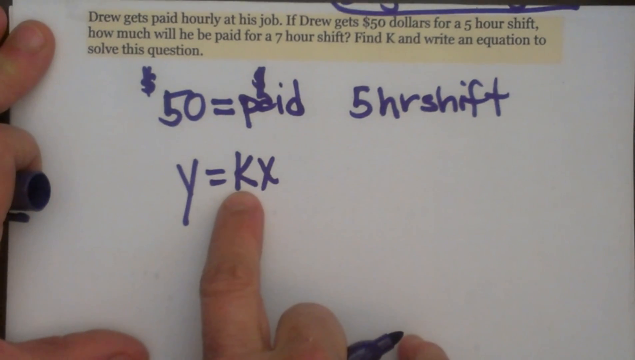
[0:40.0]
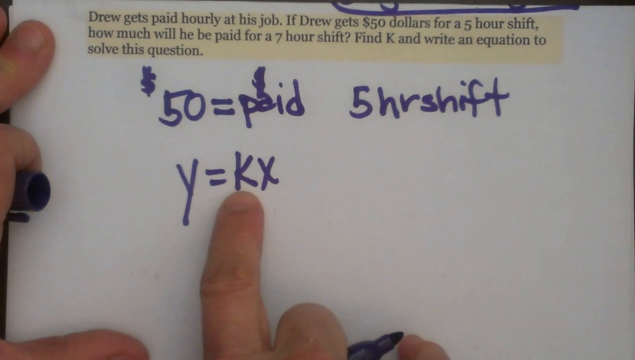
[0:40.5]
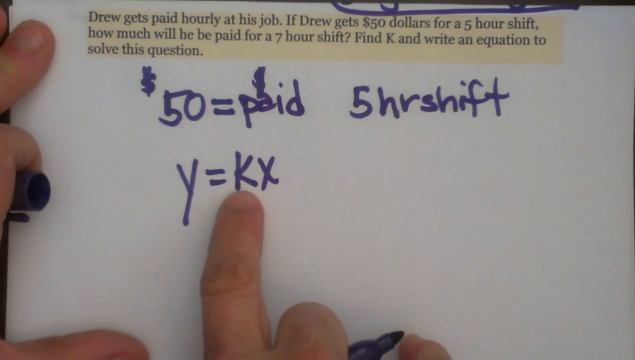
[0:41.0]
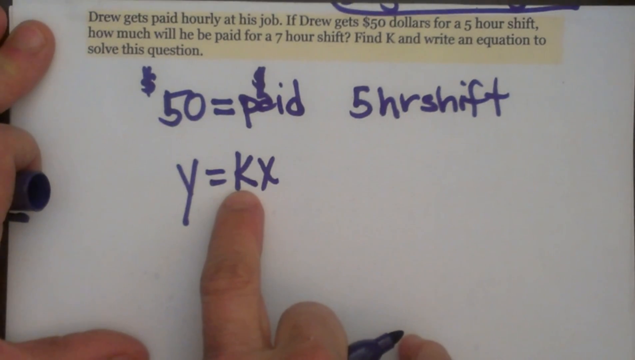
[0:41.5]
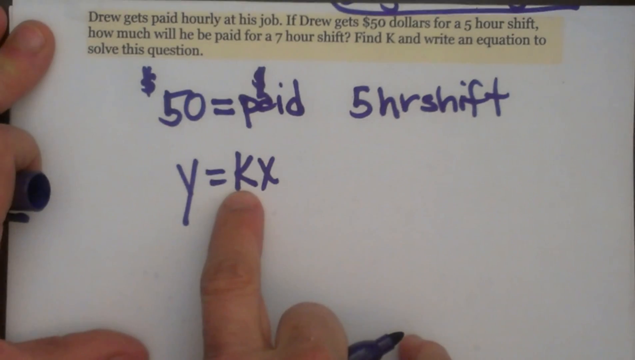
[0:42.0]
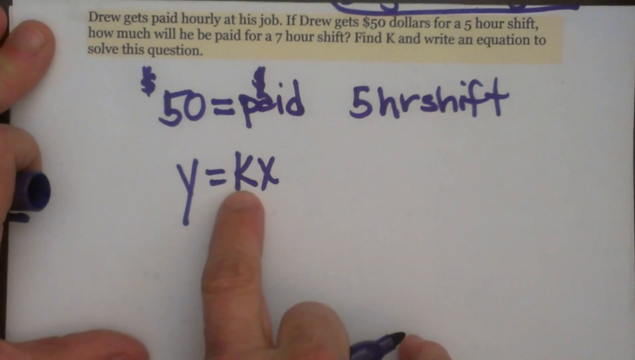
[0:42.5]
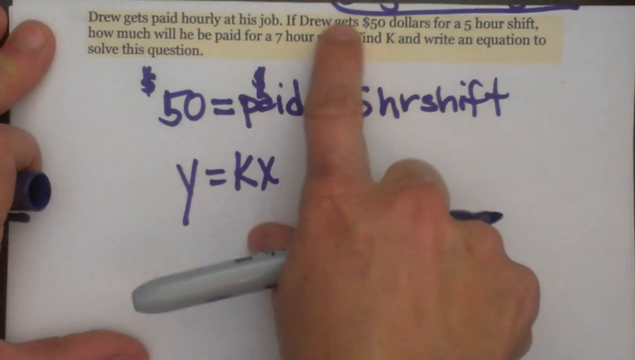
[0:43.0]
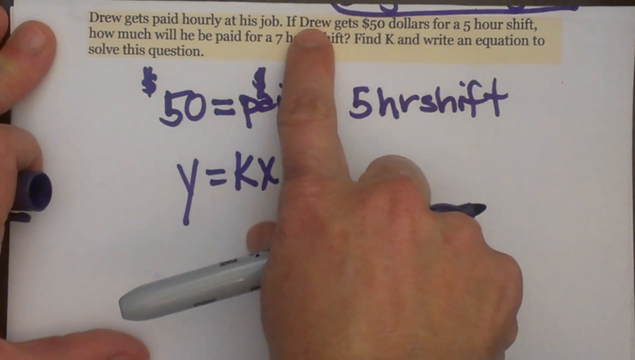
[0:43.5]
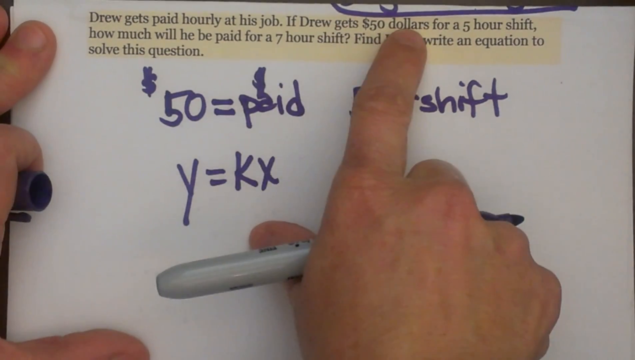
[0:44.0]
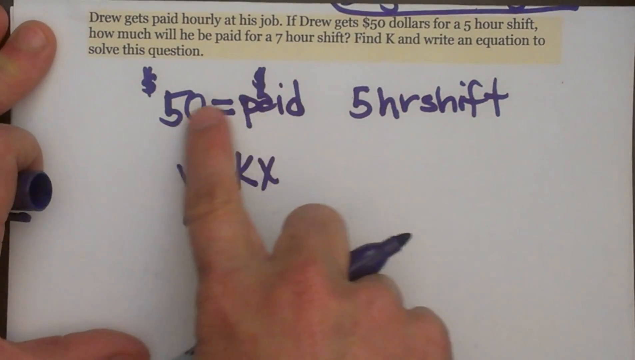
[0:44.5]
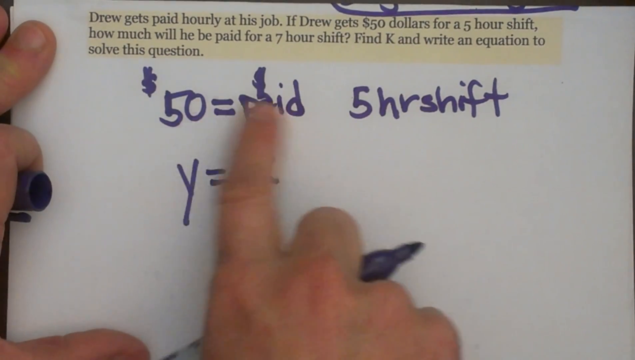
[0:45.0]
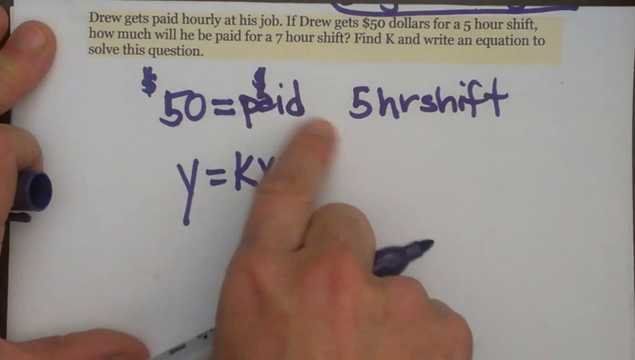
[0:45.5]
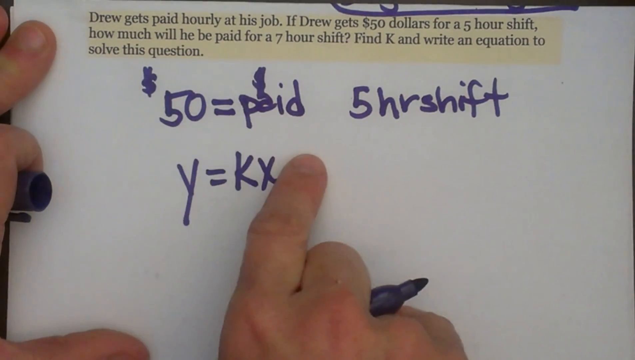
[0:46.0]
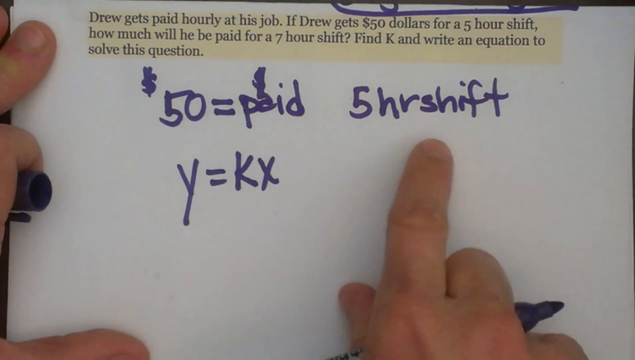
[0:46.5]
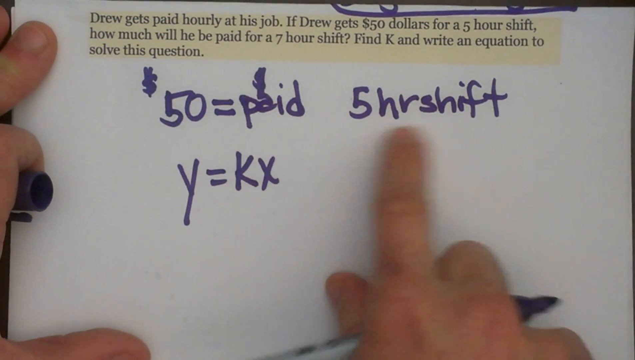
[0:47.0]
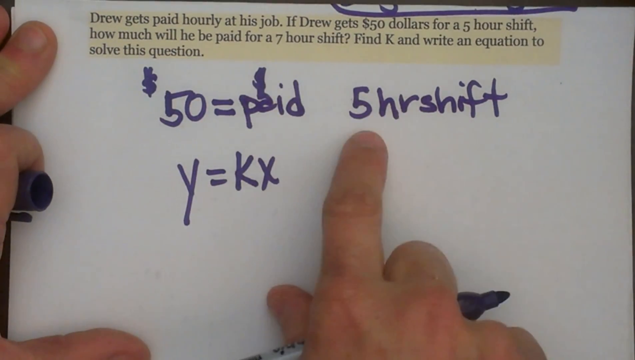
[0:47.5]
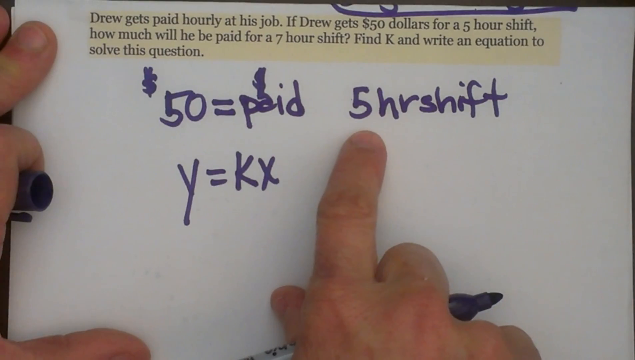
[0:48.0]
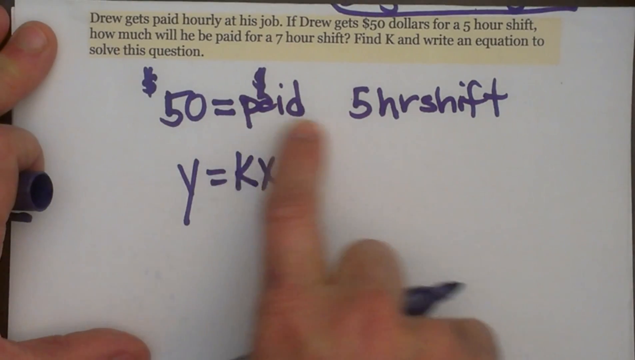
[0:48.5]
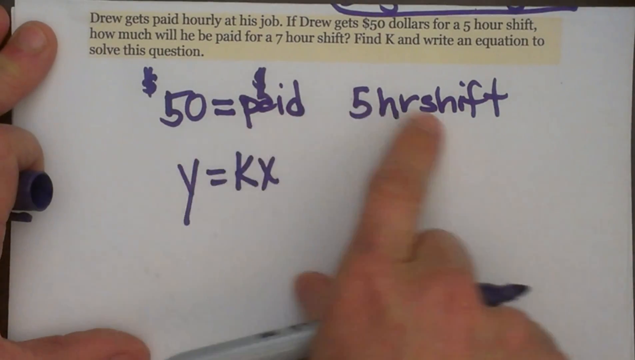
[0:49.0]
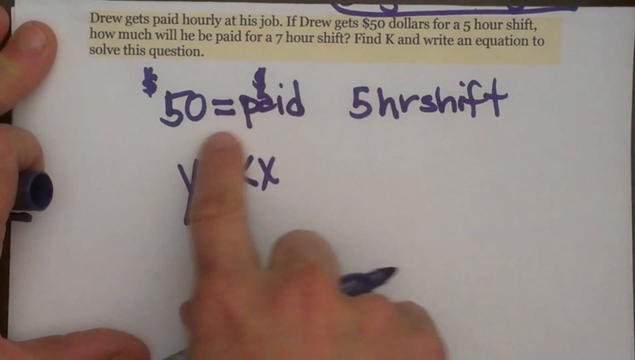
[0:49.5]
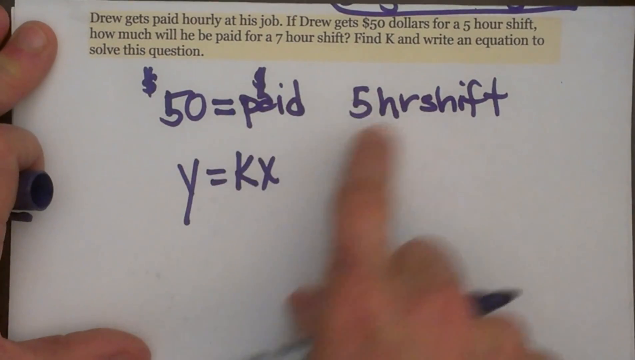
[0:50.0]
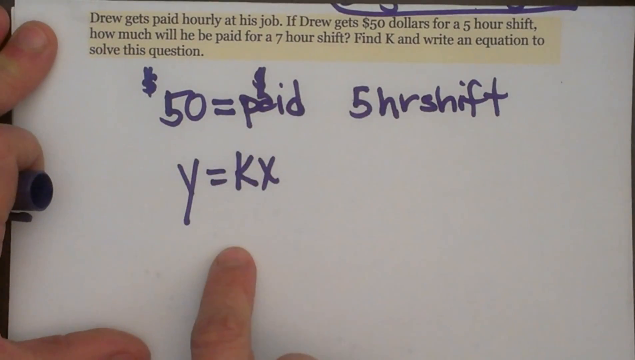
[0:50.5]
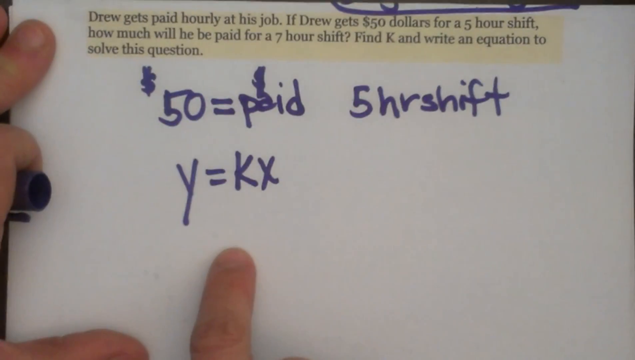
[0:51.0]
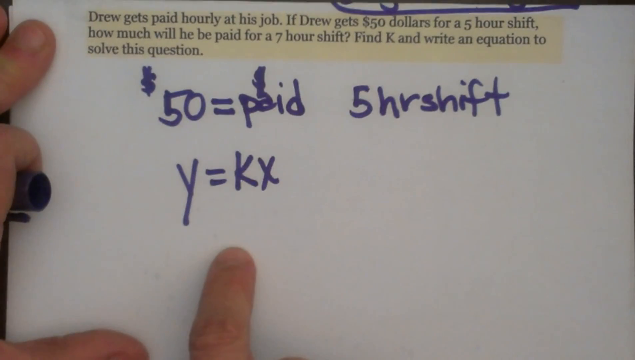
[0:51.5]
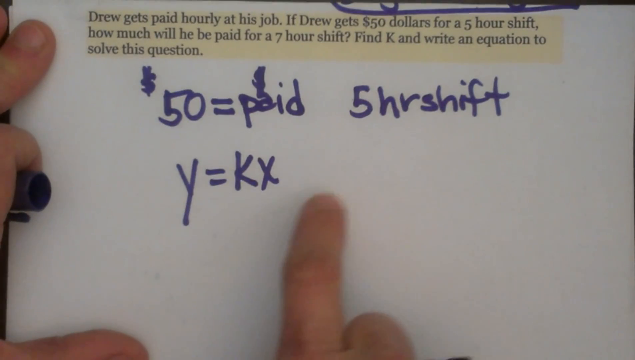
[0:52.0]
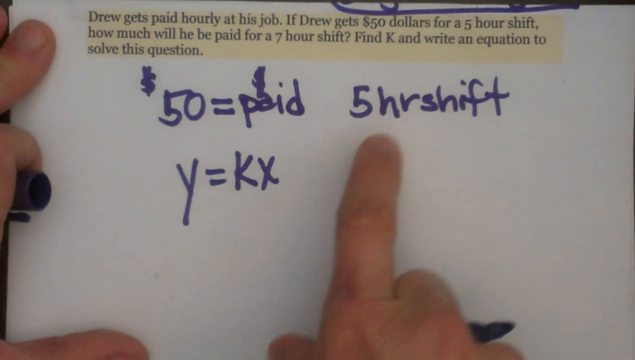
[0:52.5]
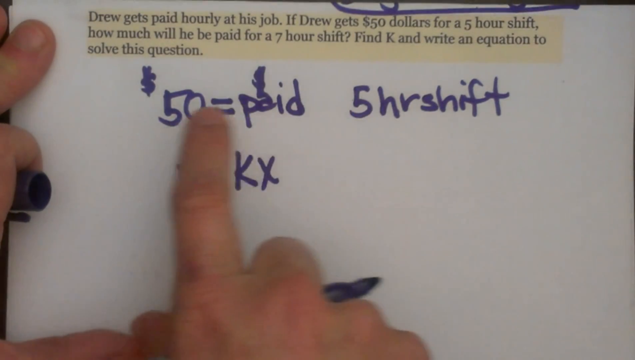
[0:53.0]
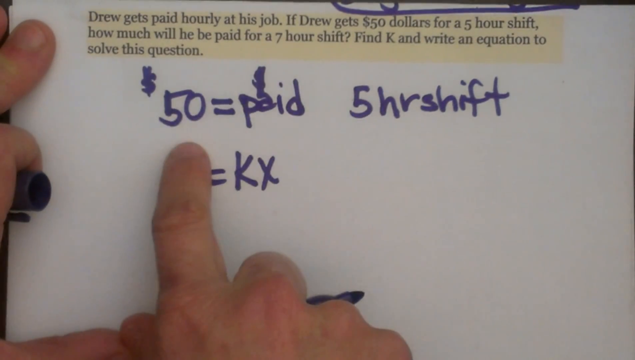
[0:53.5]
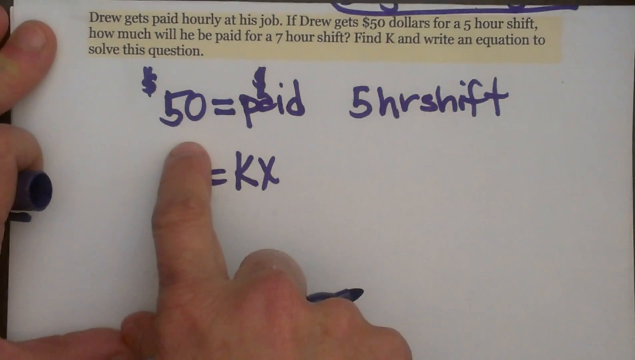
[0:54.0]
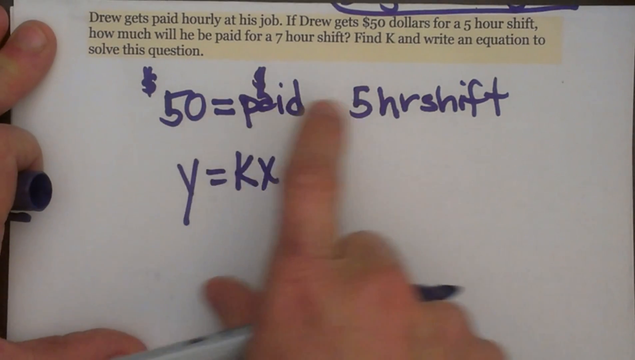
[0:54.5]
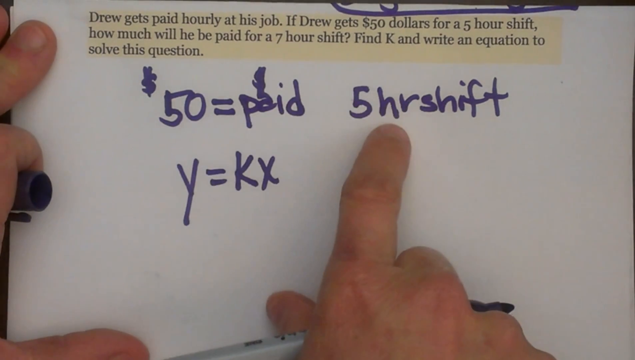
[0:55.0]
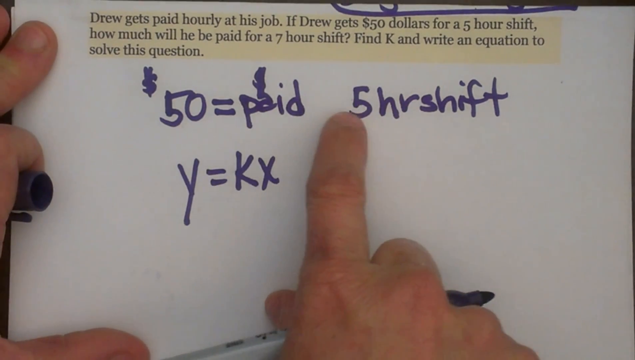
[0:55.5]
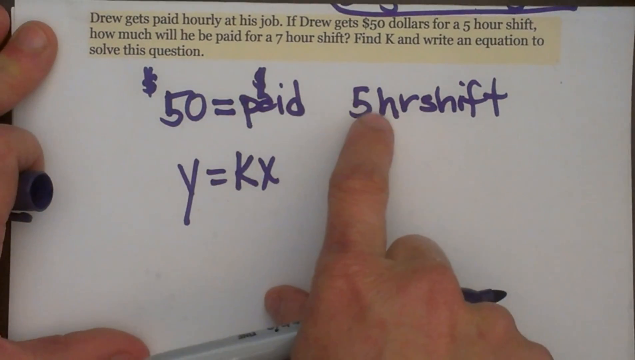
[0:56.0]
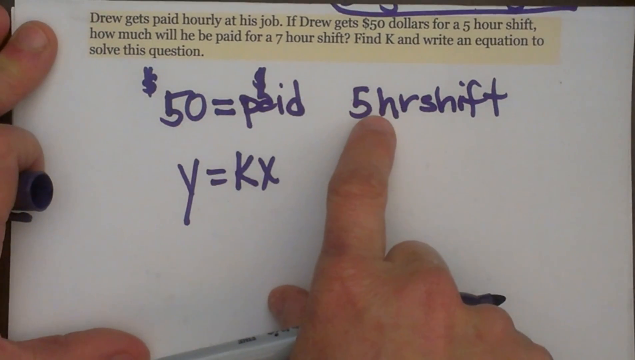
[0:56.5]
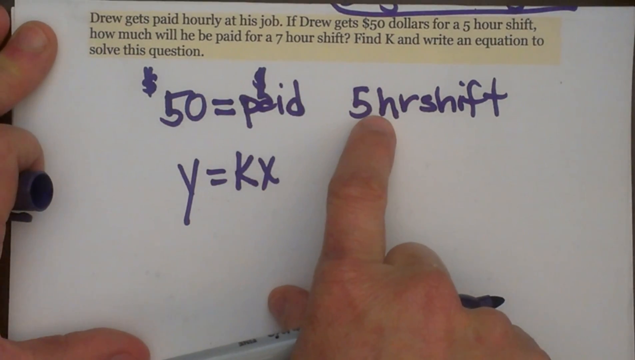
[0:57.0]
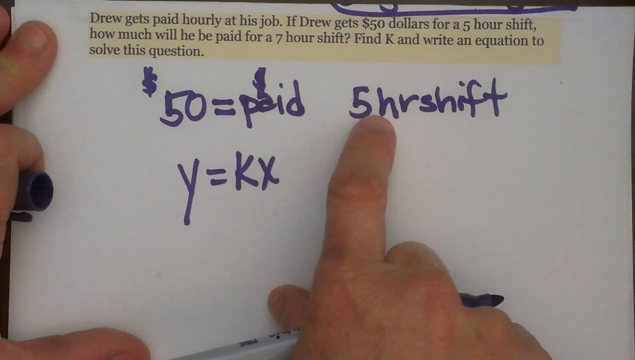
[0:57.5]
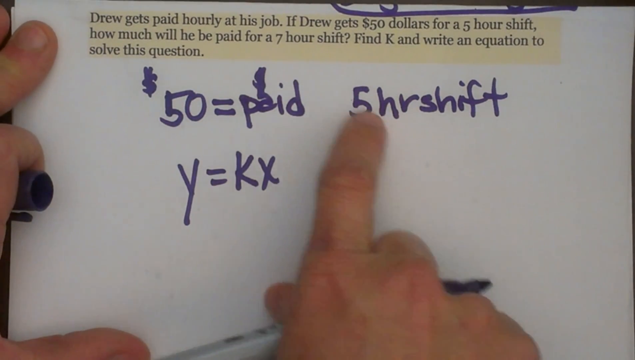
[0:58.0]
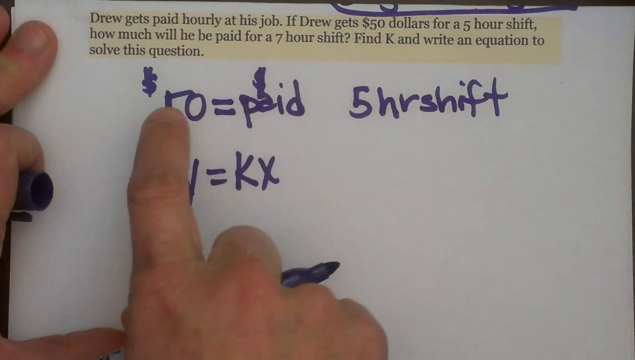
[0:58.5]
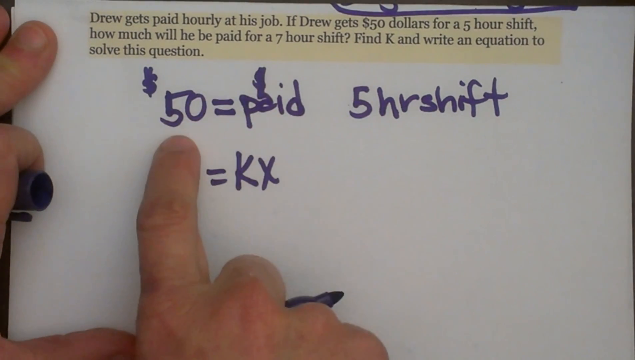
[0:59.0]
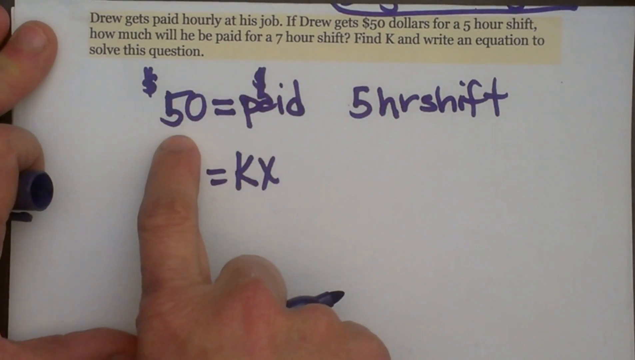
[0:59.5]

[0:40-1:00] A person reads a short paragraph at the top of a white paper, highlighted in yellow, moving the right index finger underneath the words and holding it under certain words, such as K and "solve this question." The paper shifts a little. The finger holds under "find K", then under the handwritten Y = KX, then goes back to the handwritten K and holds on it. The finger then goes from the 50 to "paid" twice, then over to "five-hour shift", linking "50 = paid" with the five-hour shift, moving back and forth from one side to the other several times. Then the finger goes to the K in the bottom equation again.